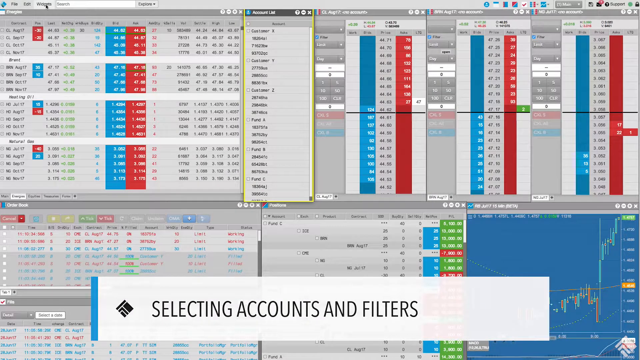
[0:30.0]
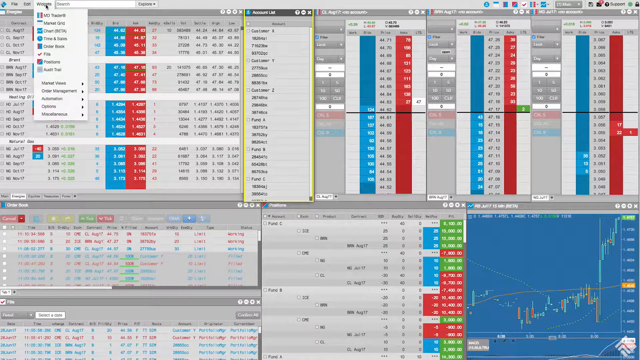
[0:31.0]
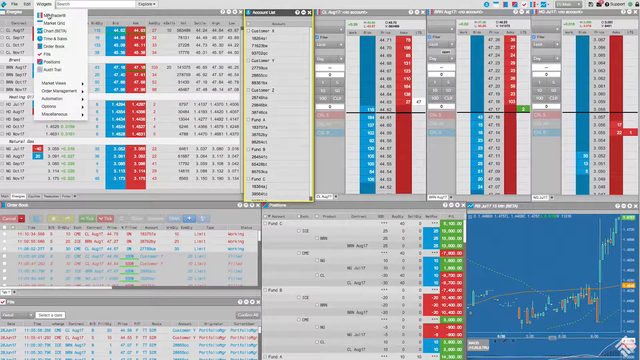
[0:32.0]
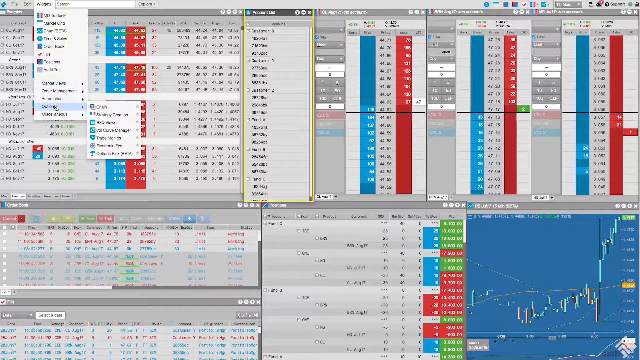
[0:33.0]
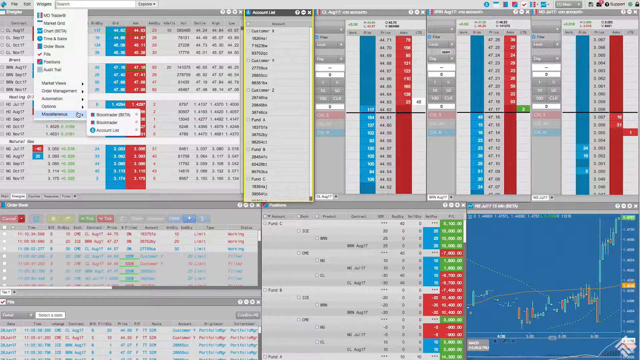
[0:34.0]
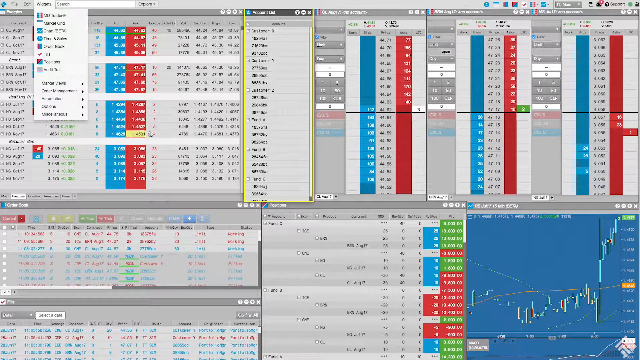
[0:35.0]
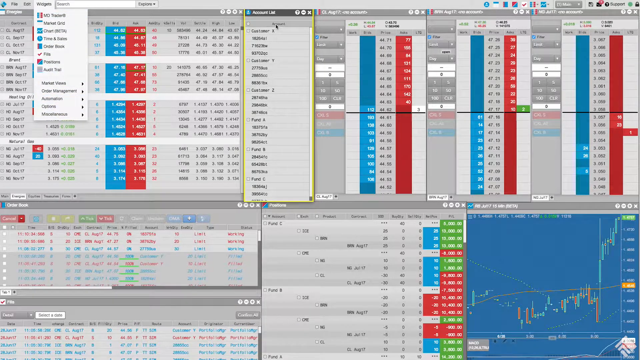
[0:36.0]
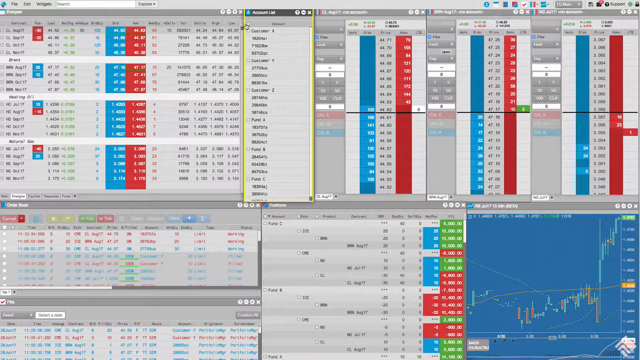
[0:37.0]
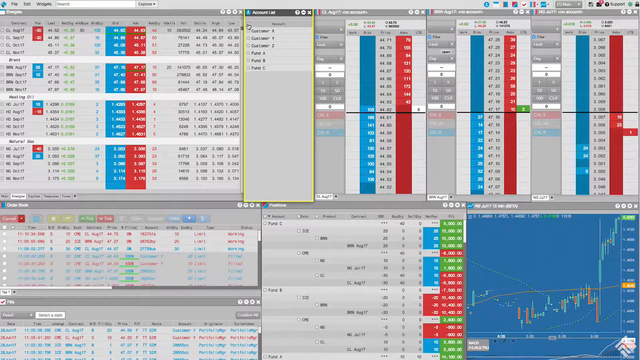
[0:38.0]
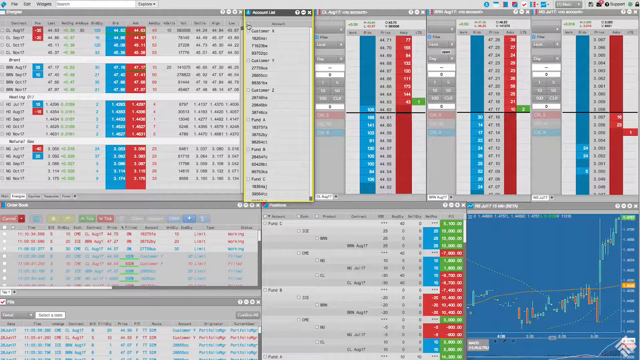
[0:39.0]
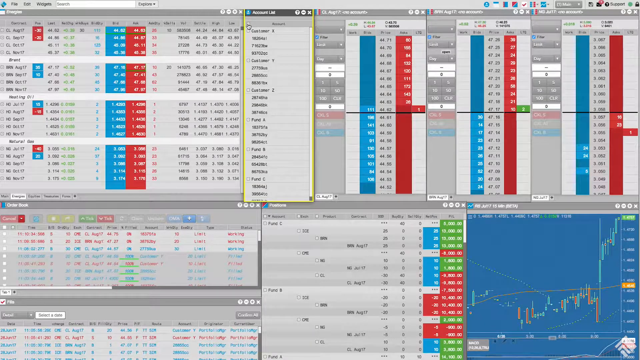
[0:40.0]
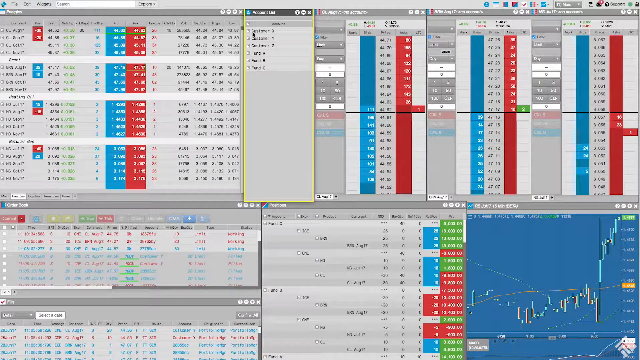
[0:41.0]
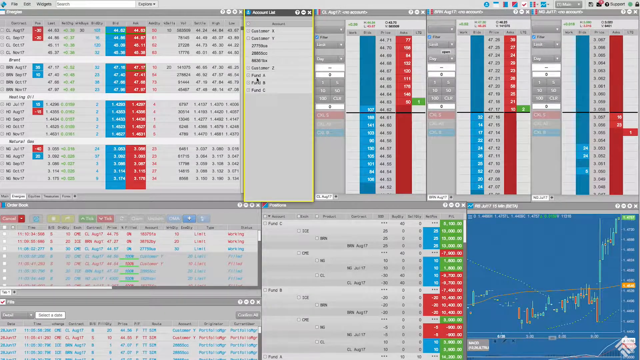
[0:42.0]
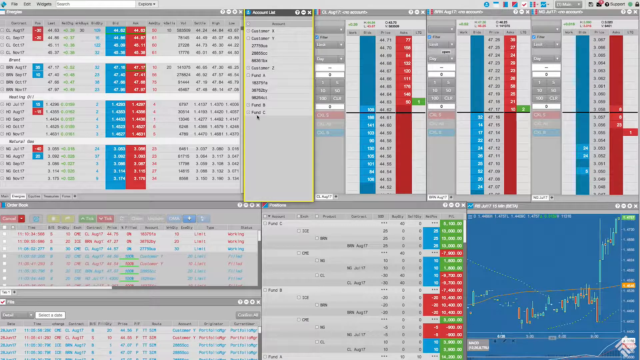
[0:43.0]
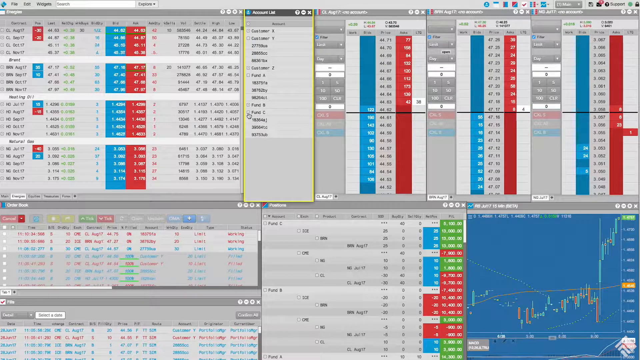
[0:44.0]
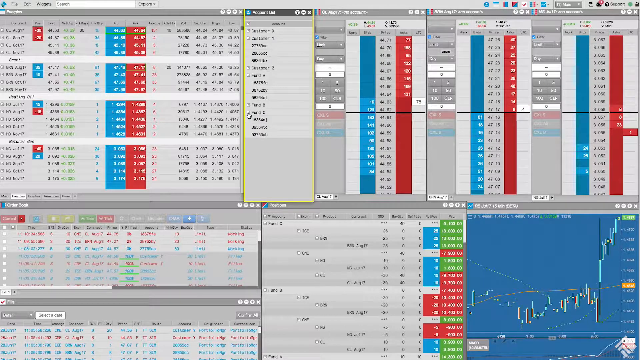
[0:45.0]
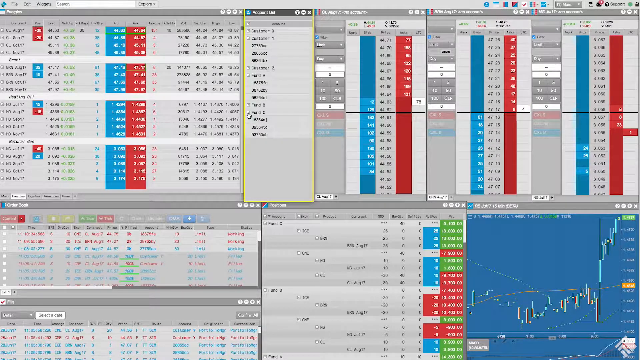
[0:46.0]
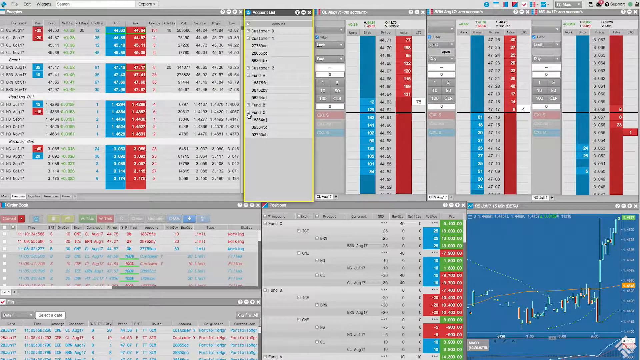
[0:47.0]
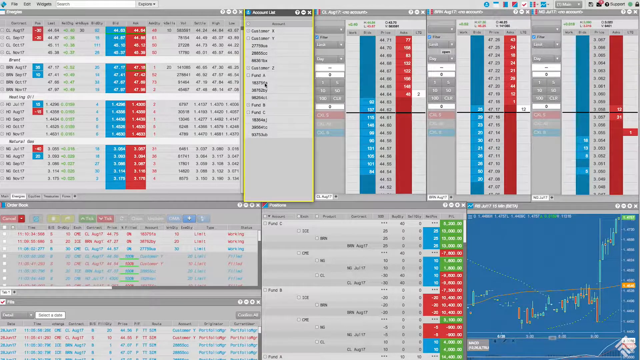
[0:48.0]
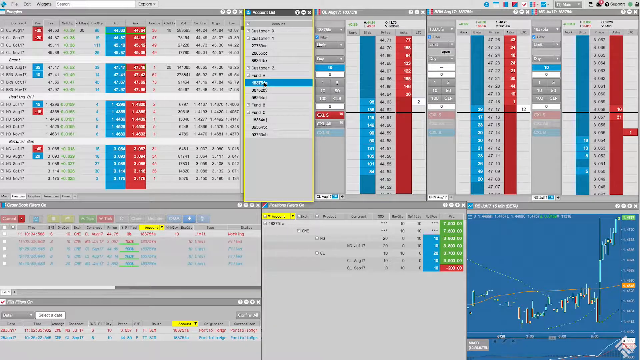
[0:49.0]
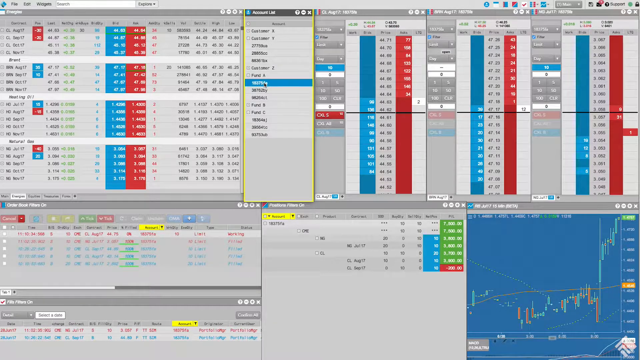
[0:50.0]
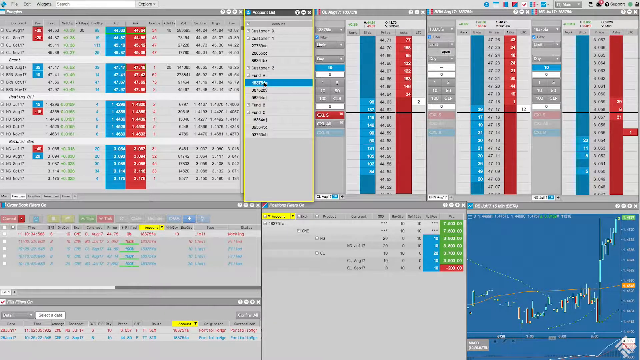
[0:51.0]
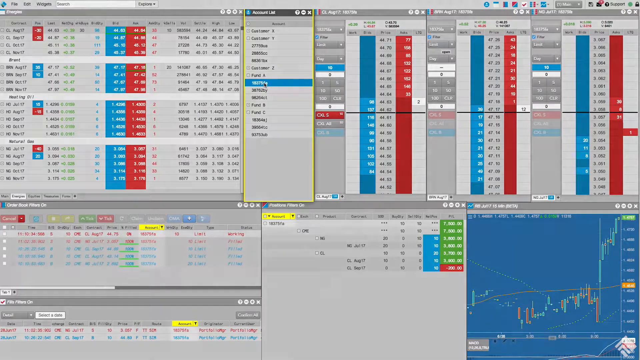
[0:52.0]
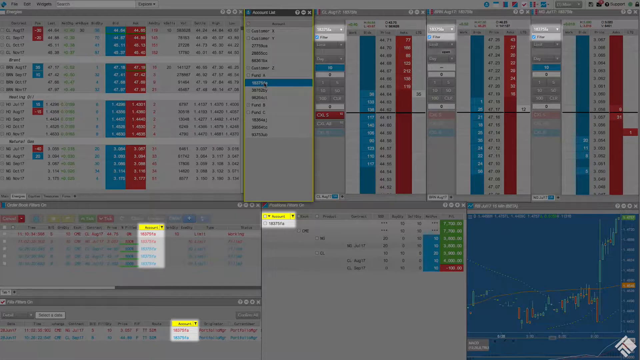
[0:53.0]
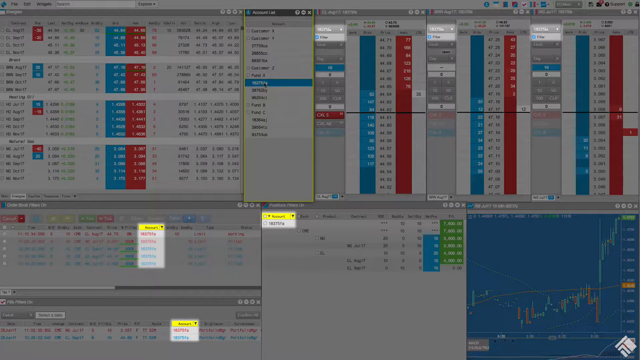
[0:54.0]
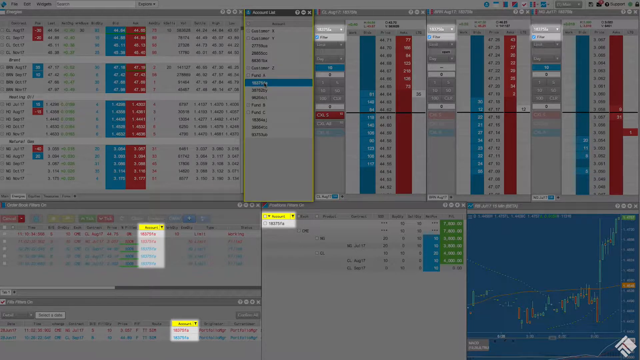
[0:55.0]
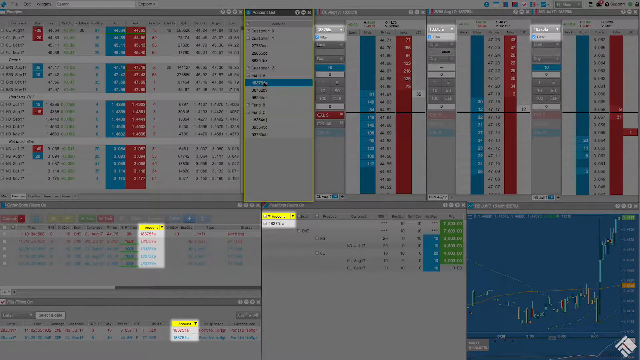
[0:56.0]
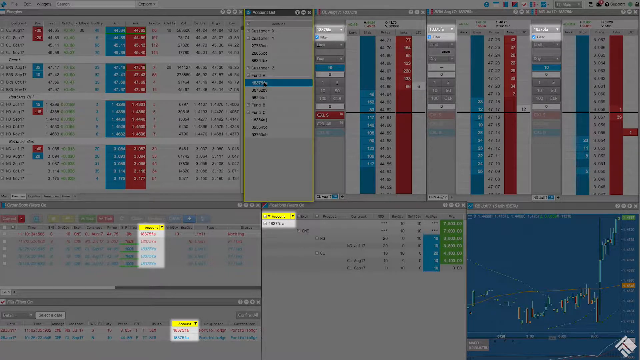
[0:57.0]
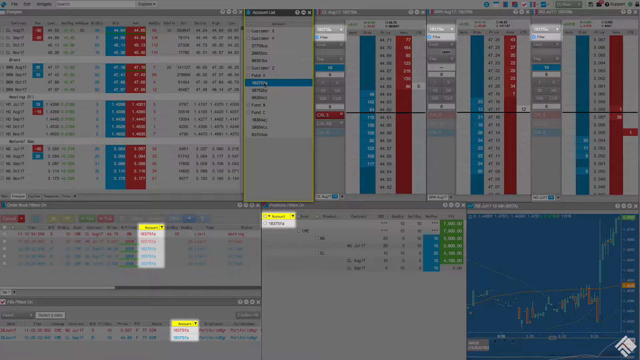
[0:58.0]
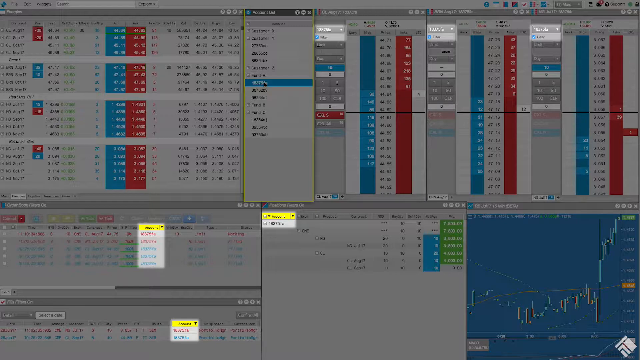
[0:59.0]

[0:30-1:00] A screen capture of a computer shows multiple windows open, all with a similar color scheme and pattern: blue and red, with many numbers and column names that cannot be clearly made out. In the bottom right-hand corner there is a small bar graph. The user clicks on something that says "widgets," scrolls down, and clicks the last option, which opens a window and expands three different parts. Numbers tick on the different open windows. The screen then fades to a darker tint, and five areas are highlighted: three gray ones at the top near the right side, and two at the bottom on the center window and the left window. A third one then pops up on the left side, and "selecting accounts and filters" appears at the bottom of the screen.